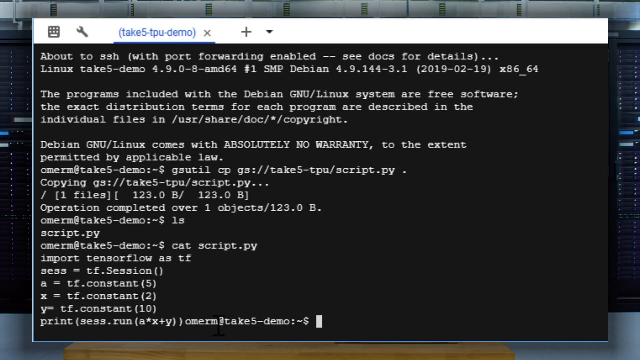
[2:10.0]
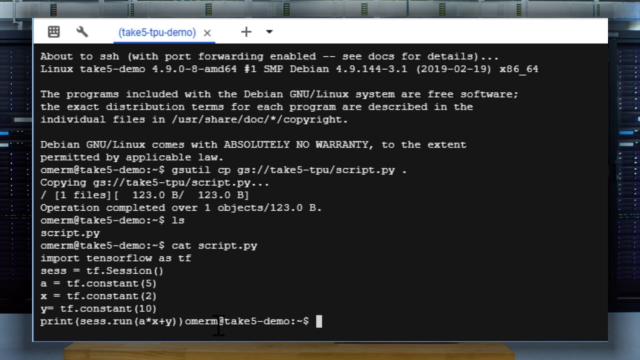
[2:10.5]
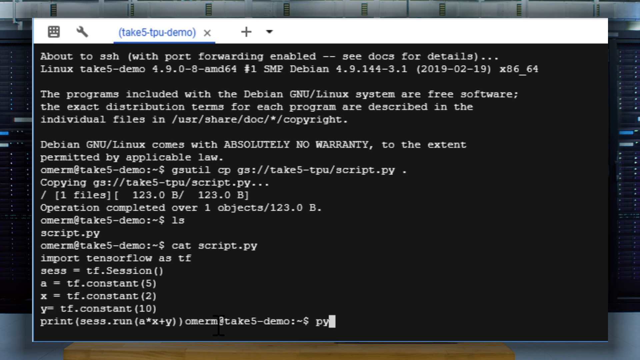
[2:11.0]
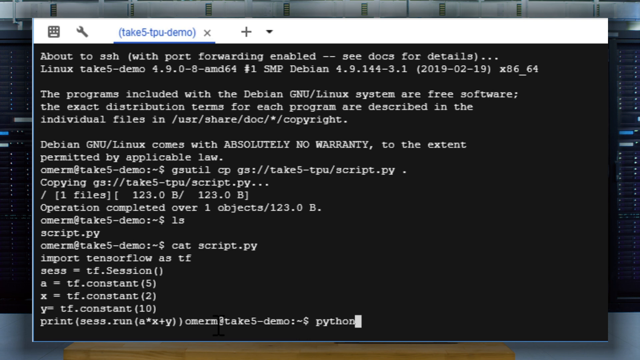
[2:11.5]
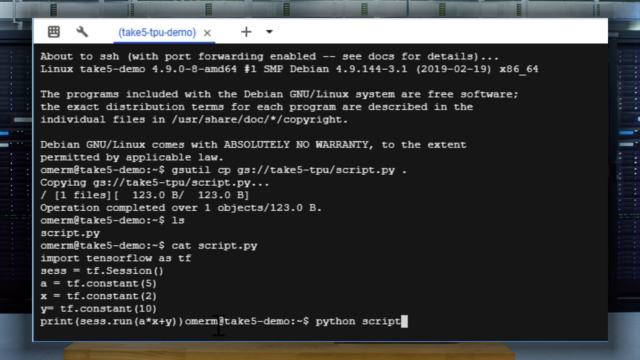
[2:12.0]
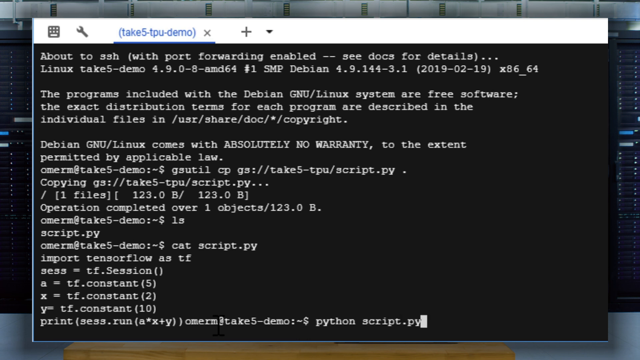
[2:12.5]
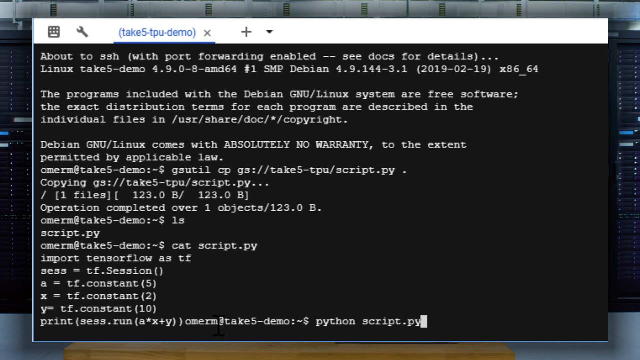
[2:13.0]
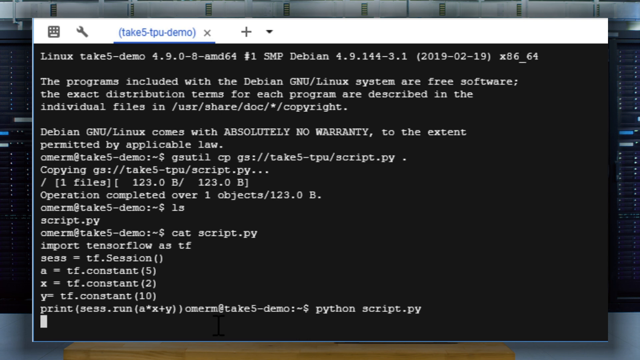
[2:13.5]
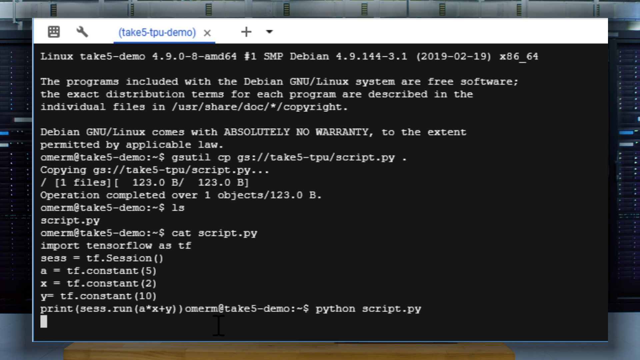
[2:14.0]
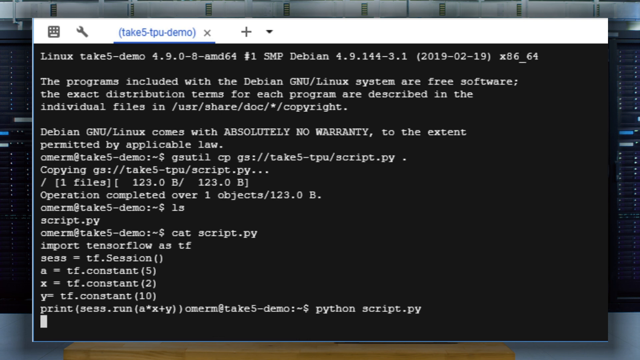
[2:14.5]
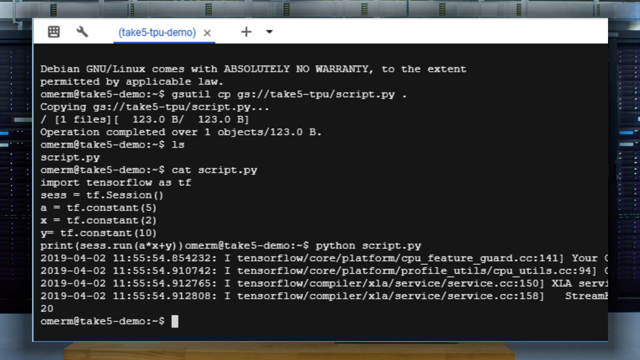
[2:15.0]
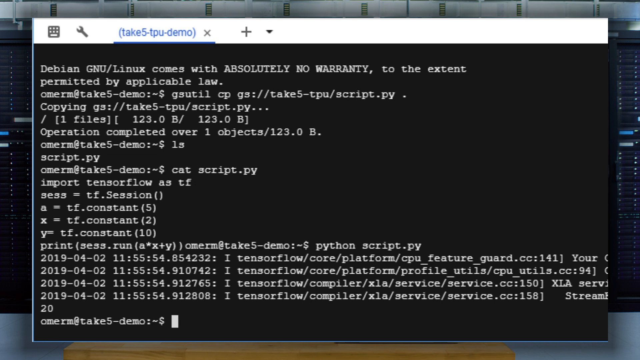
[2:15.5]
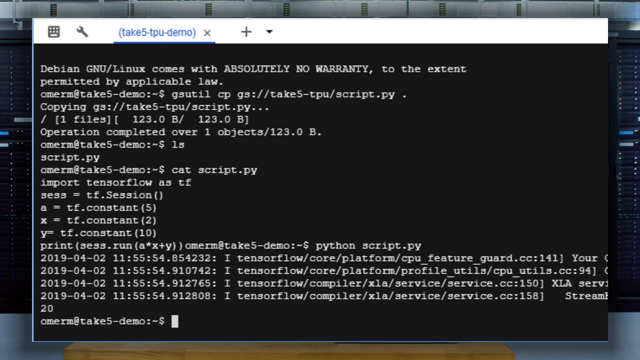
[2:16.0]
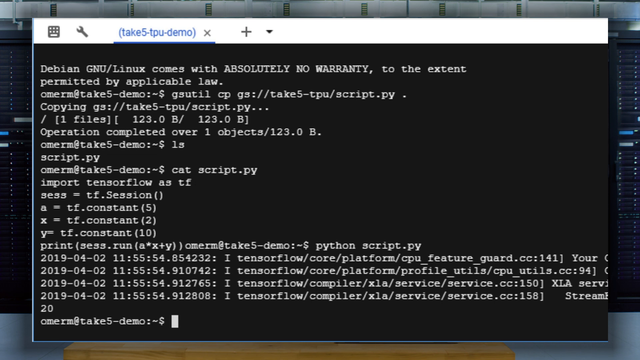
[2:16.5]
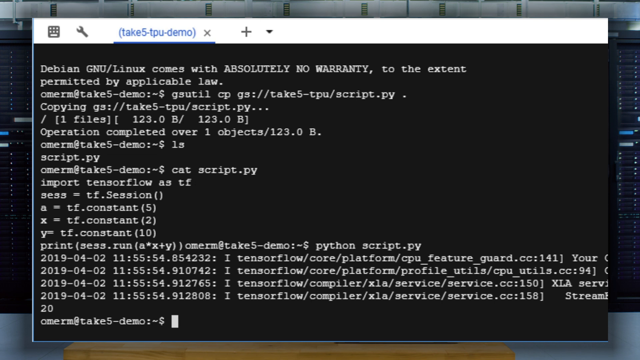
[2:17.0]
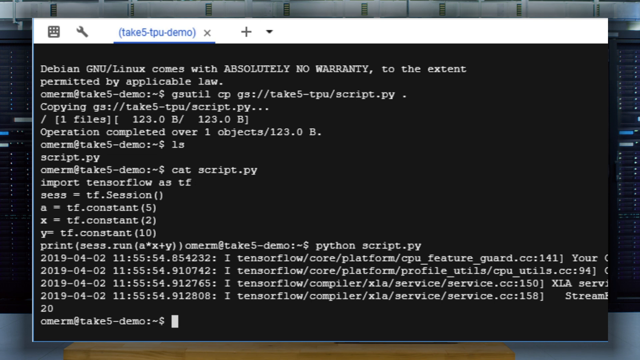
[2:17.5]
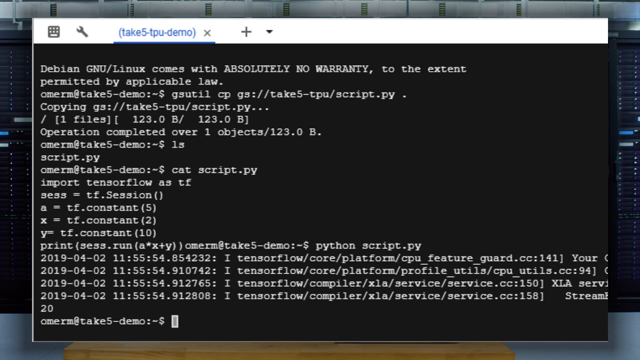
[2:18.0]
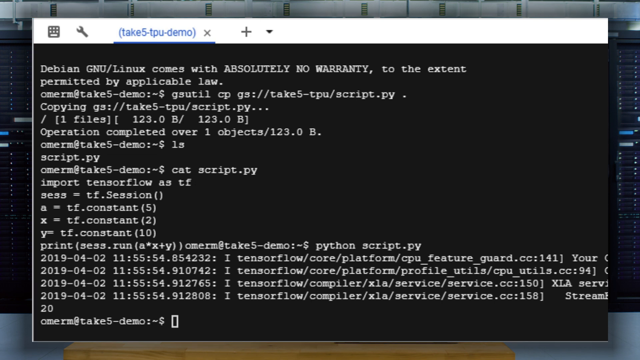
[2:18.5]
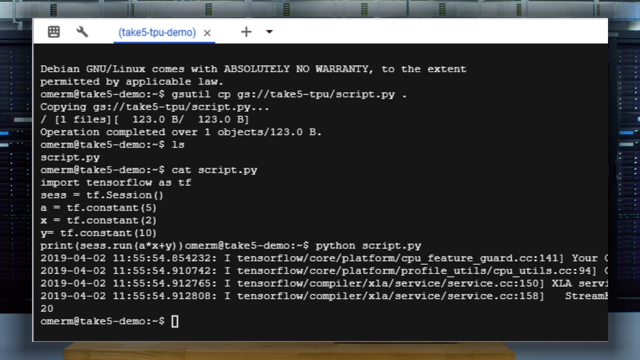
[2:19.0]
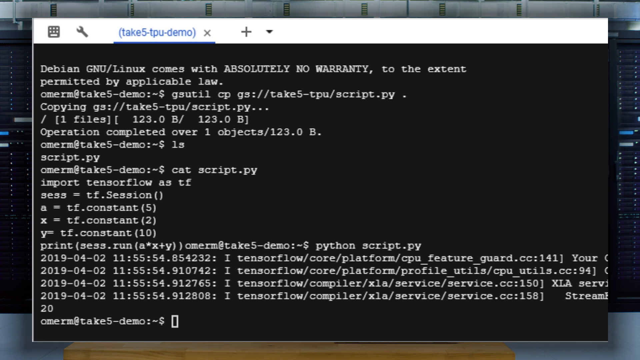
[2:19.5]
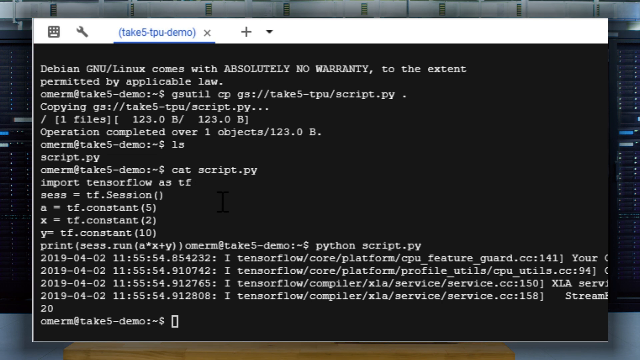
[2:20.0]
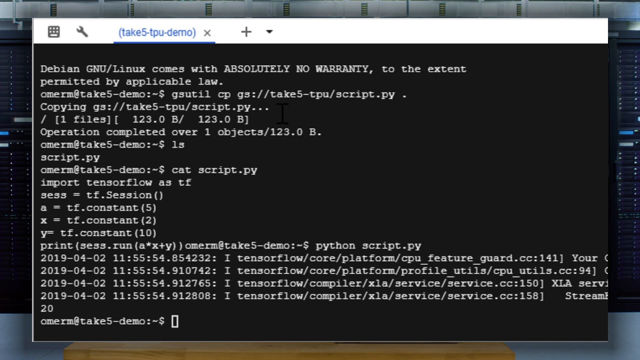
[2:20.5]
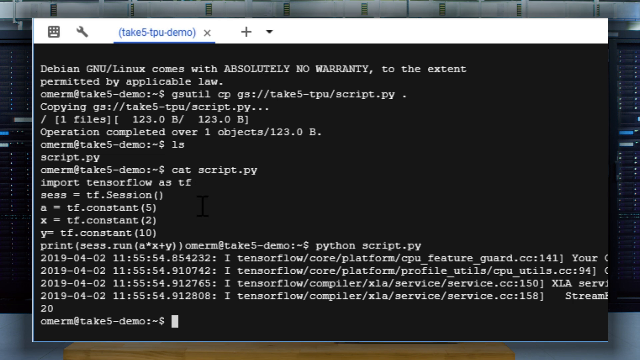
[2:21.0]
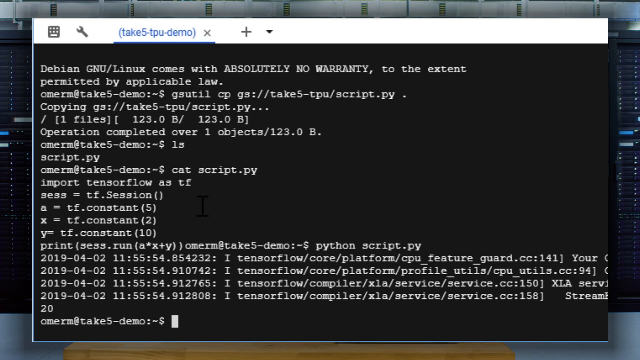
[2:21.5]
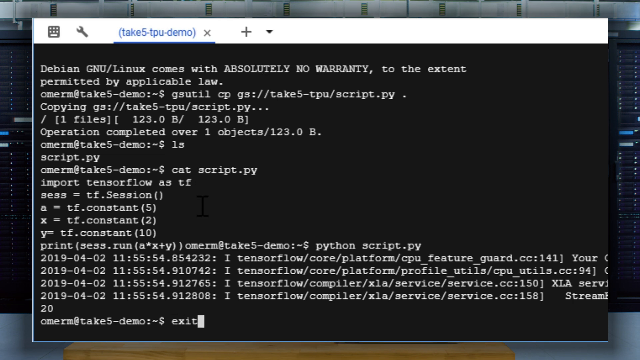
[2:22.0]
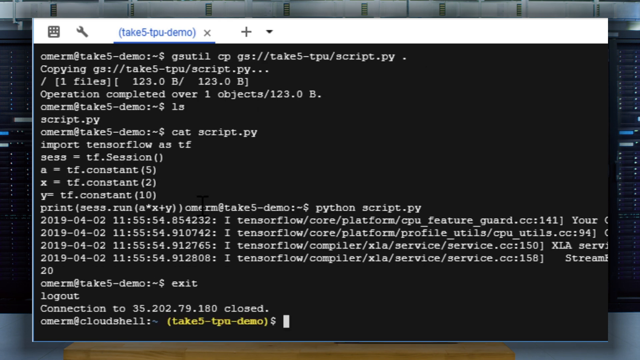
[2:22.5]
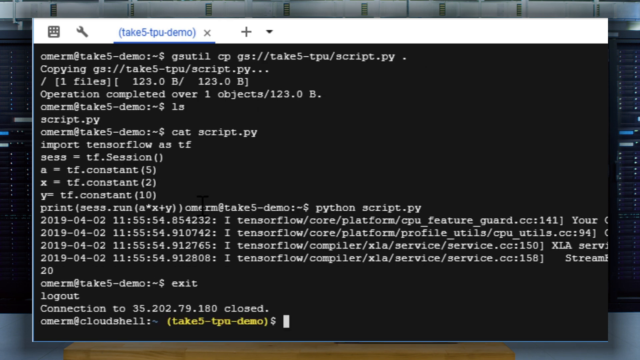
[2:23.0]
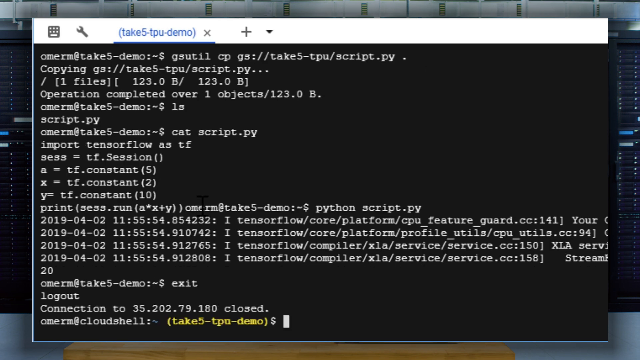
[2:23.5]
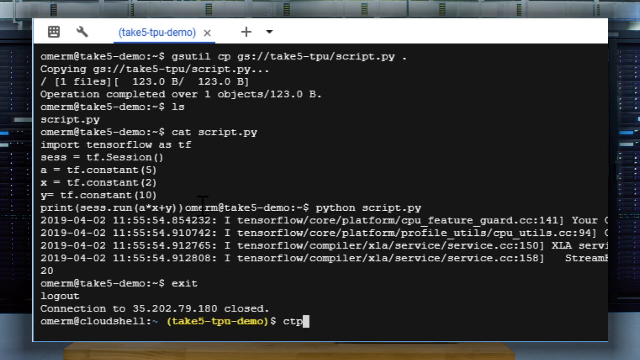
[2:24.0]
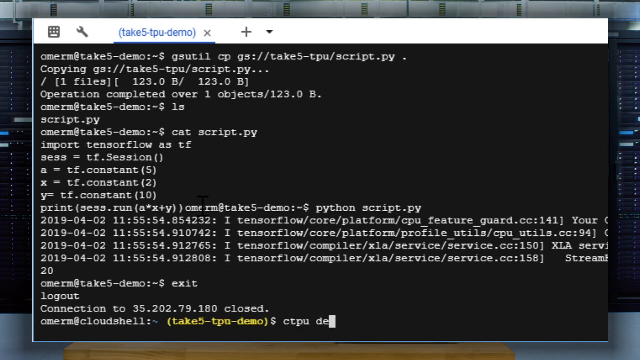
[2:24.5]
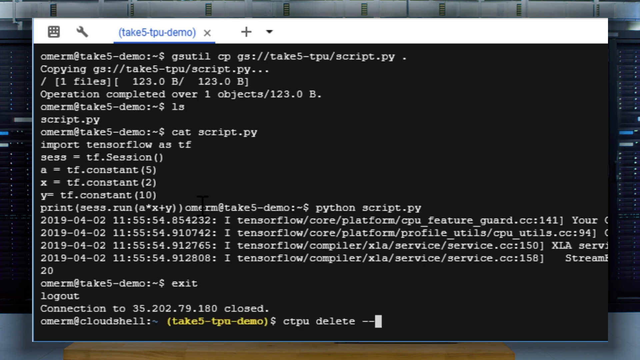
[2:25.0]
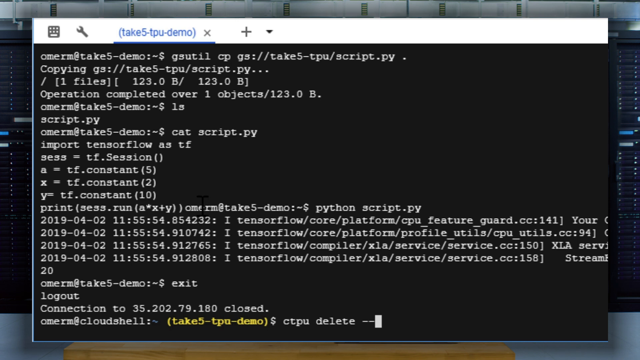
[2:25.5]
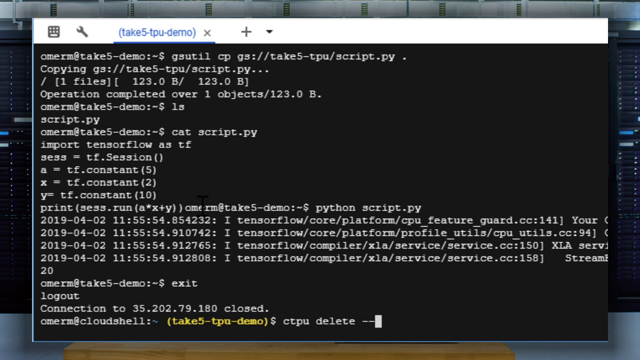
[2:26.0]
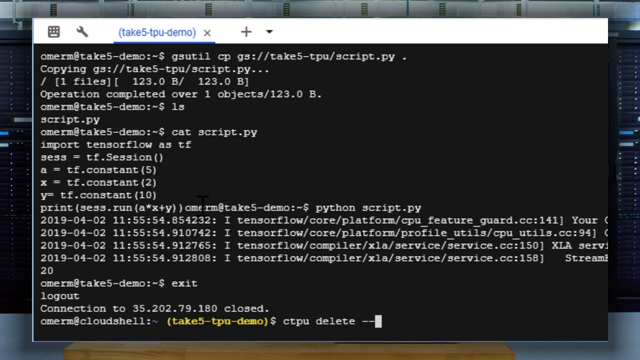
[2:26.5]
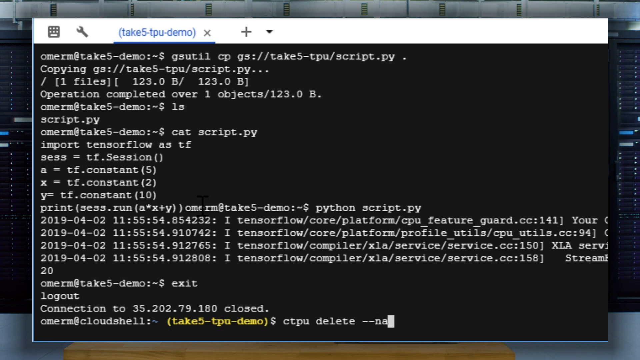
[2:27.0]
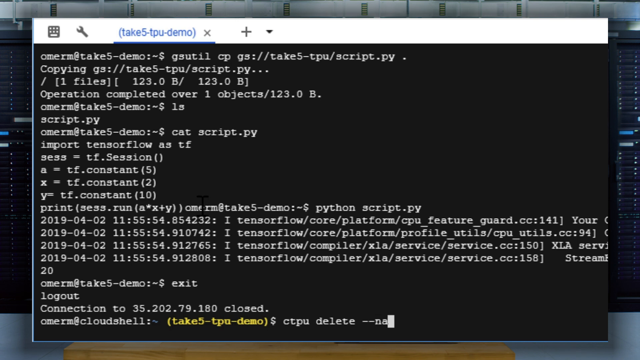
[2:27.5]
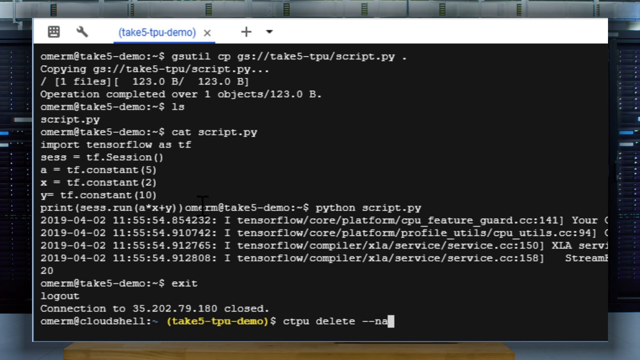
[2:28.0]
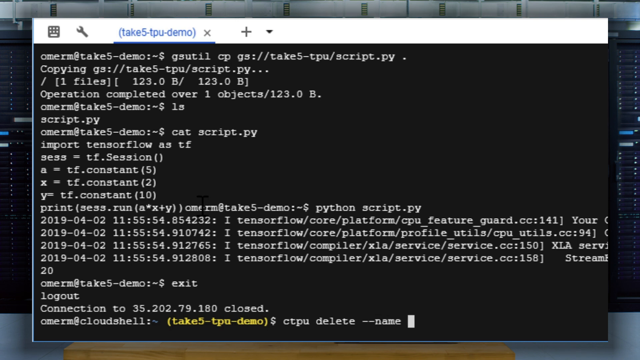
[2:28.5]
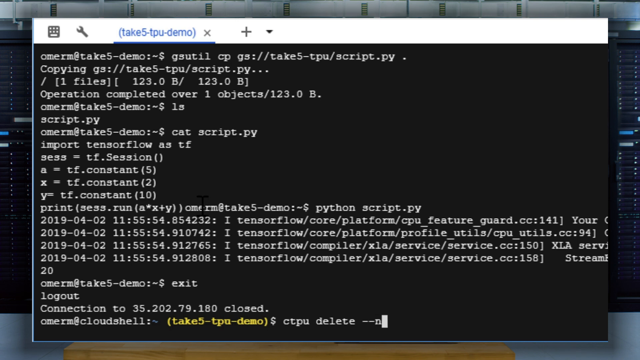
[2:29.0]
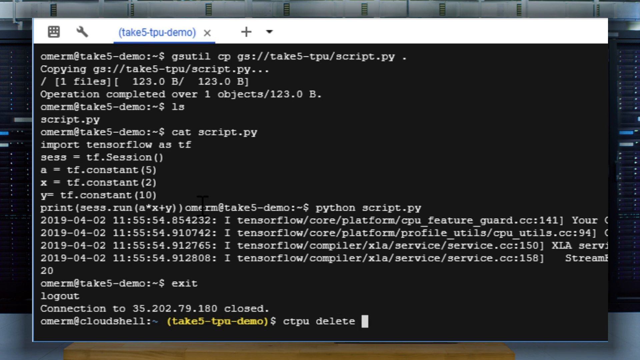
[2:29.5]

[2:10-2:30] The workspace shows a lot of data; in the third paragraph it says there is "absolutely no warranty." At the bottom the person types the command "Python script.py," which populates information for TensorFlow, various dates and numbers next to each entry. The person then types "exit" in the middle line, it says "log out," and more information populates below as the script moves along. The cursor apparently exits the workspace, as it says "connection to 35.202.79.180 closed." Below, what looks to be the person's social media handle, possibly a partial email handle, is entered.